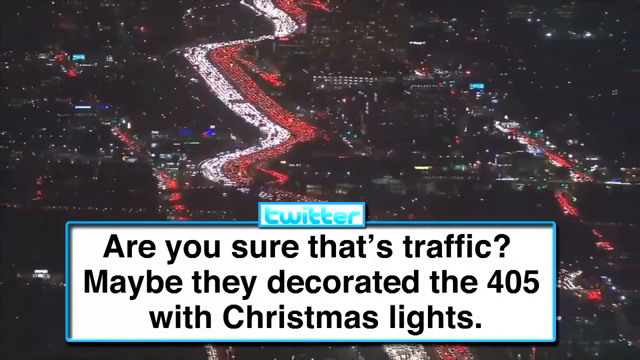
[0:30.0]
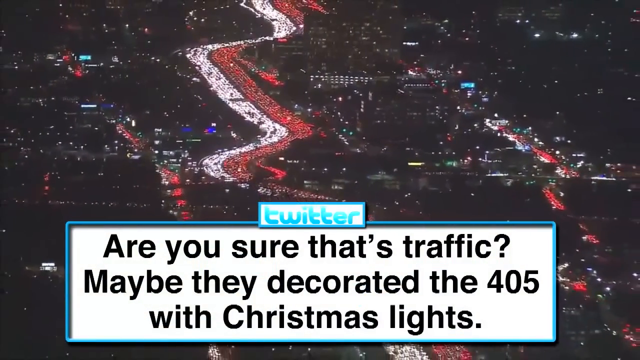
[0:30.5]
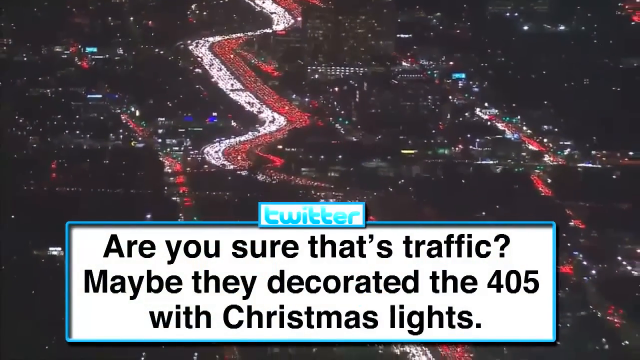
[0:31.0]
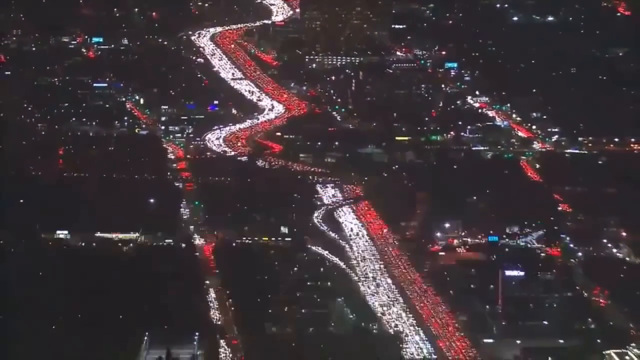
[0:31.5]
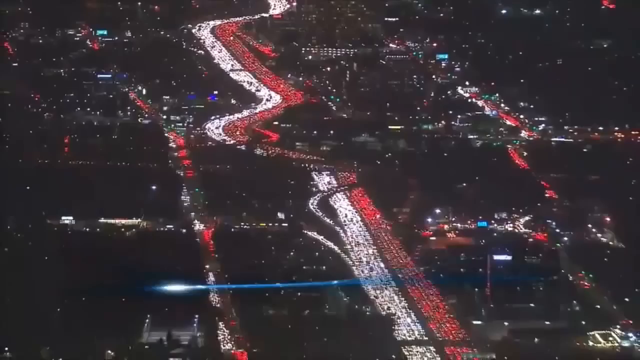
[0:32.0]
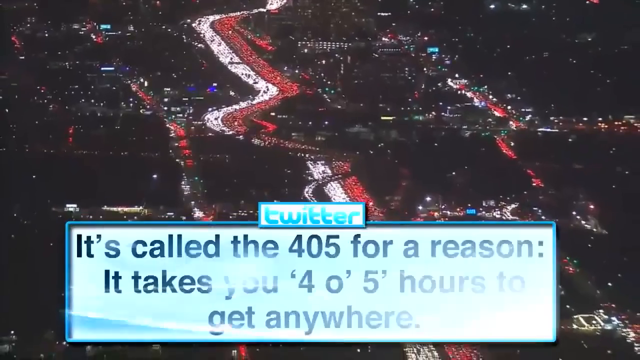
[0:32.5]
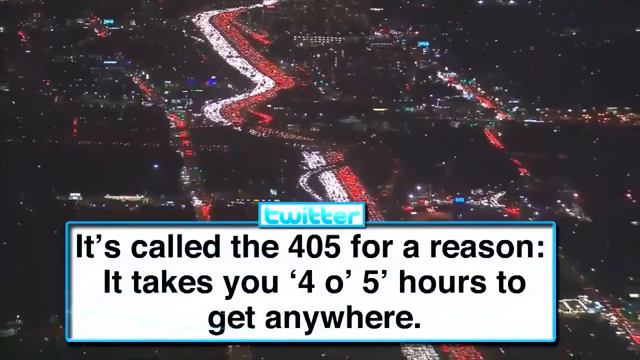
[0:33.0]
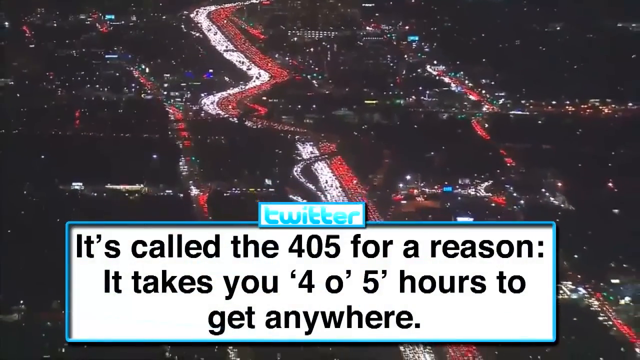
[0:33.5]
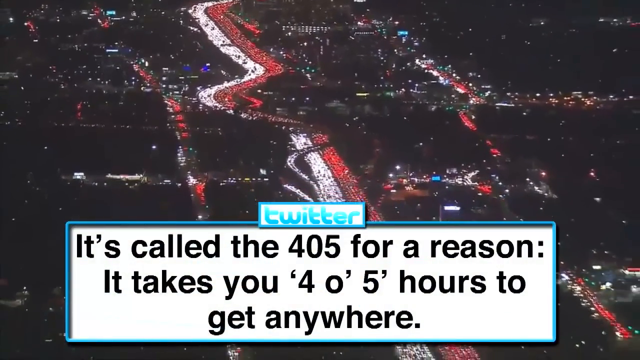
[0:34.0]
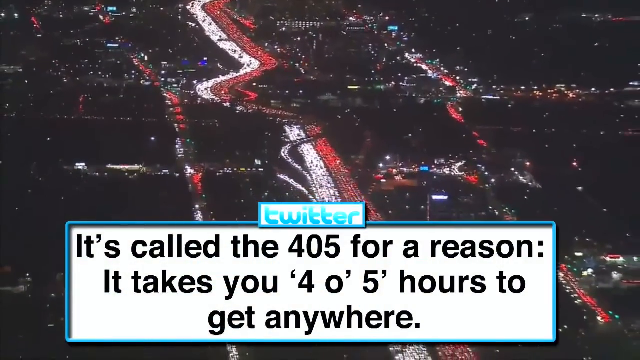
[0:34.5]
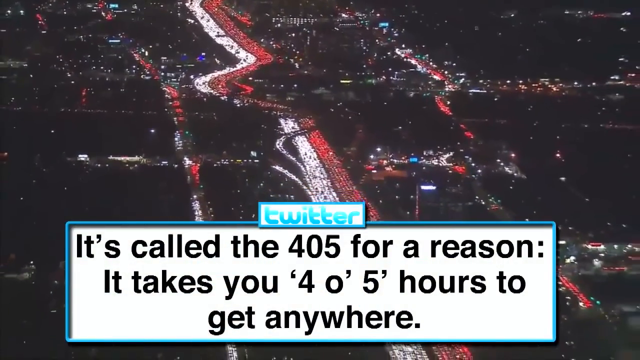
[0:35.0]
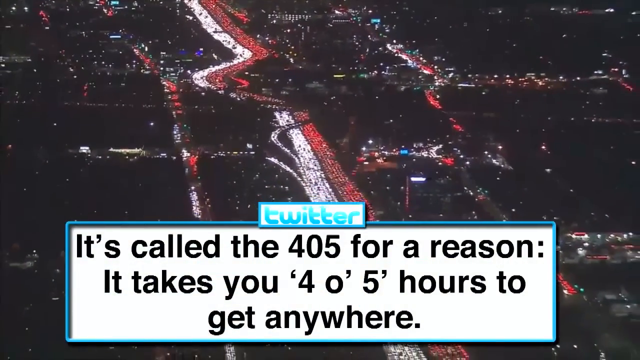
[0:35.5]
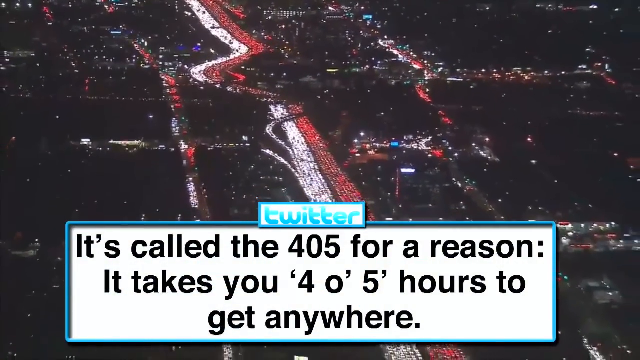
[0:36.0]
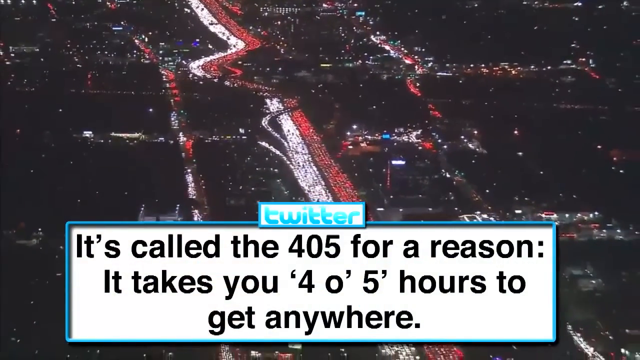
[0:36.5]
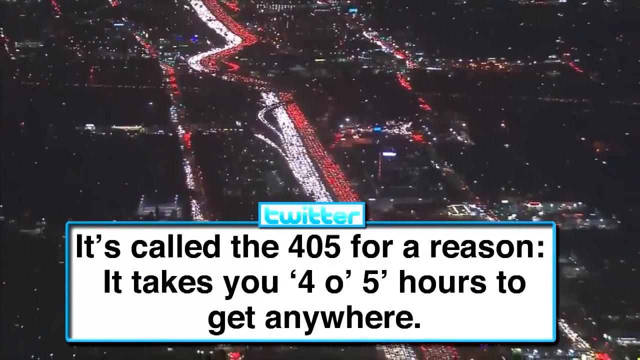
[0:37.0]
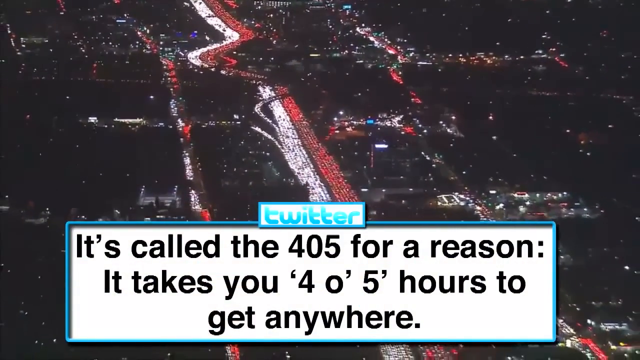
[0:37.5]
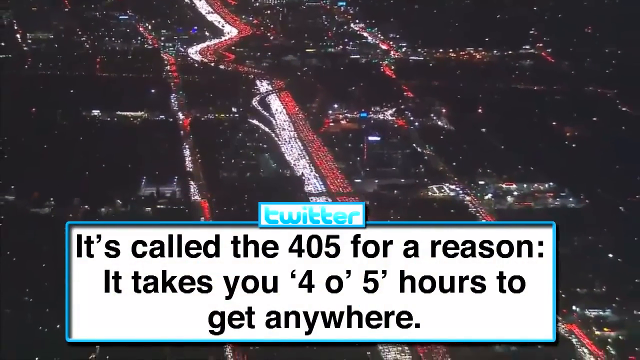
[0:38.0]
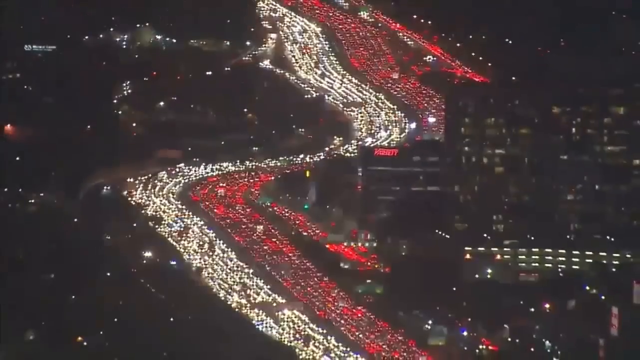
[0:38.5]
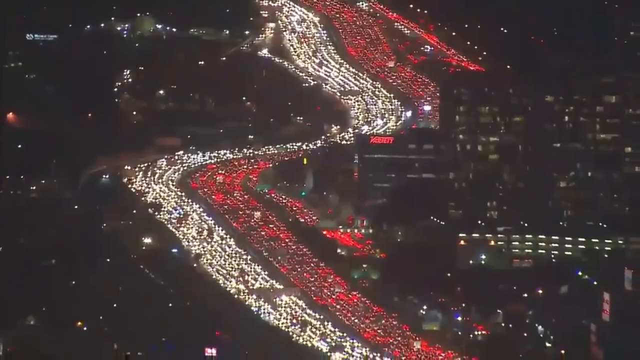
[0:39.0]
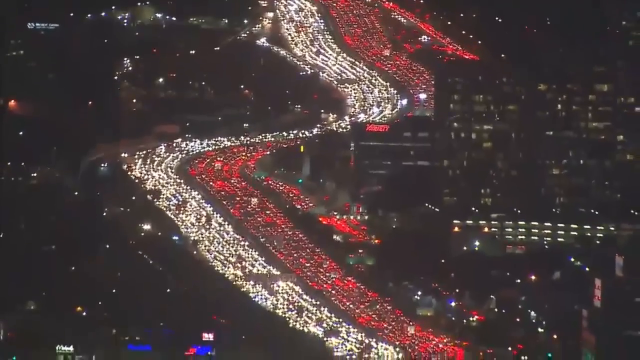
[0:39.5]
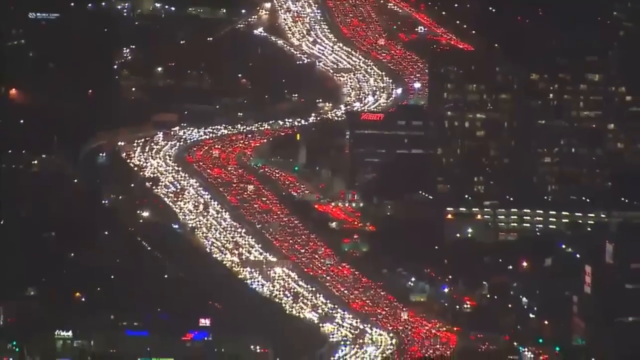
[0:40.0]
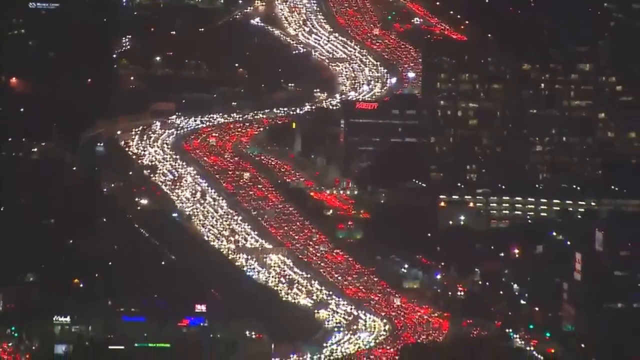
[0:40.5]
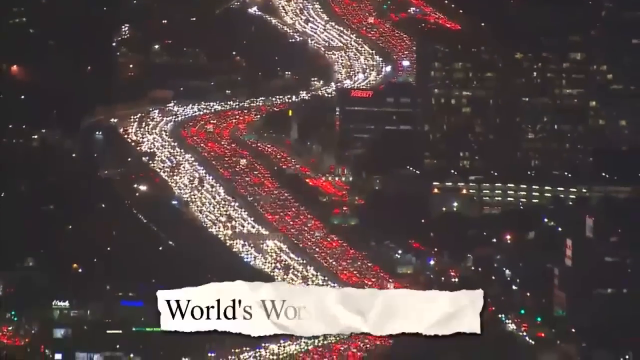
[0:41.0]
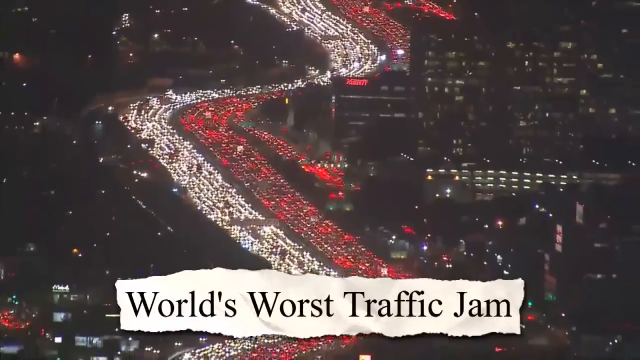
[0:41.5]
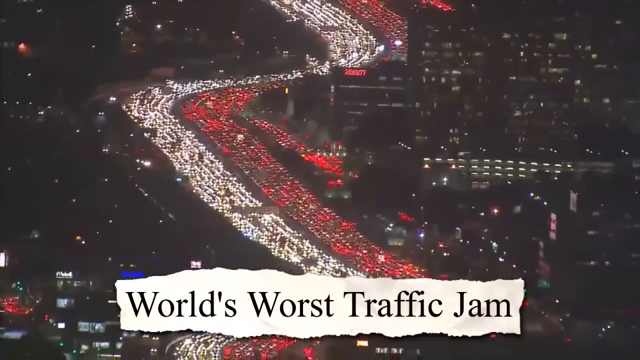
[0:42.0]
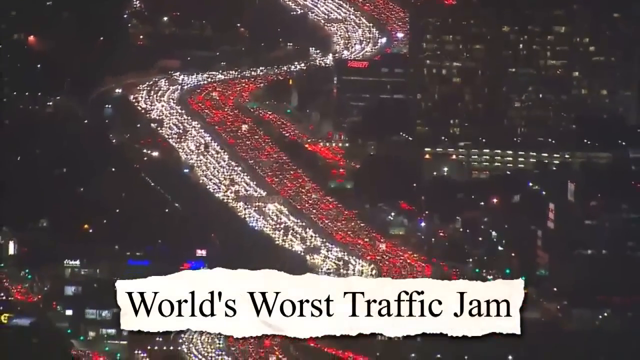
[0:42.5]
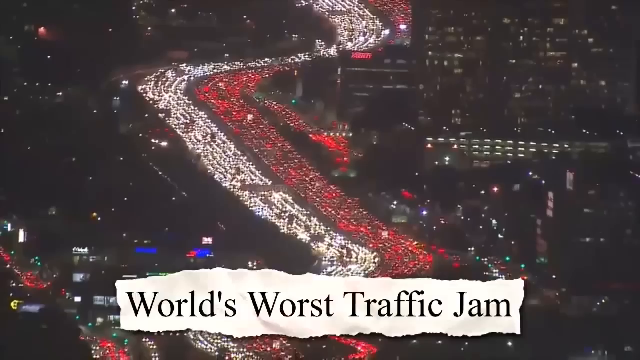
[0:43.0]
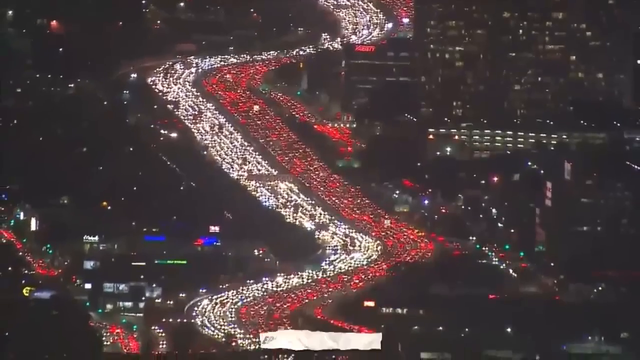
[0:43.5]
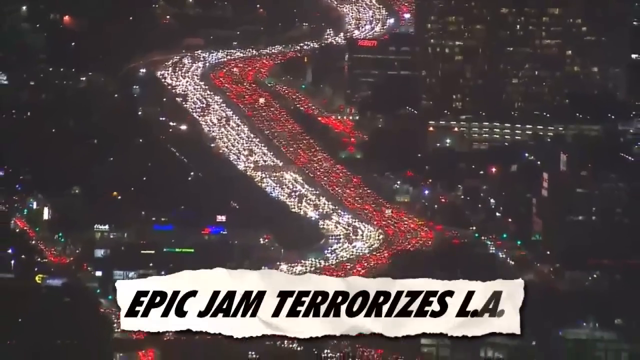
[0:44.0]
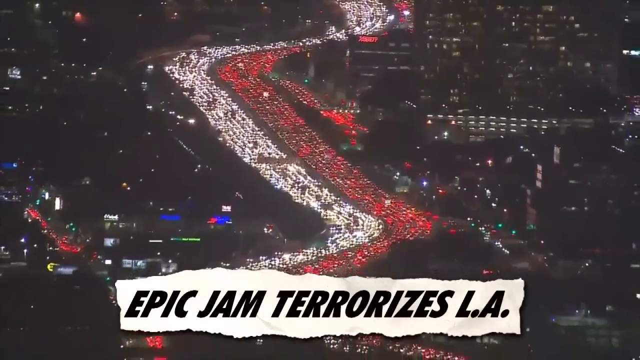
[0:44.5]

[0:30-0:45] Another Twitter comment appears in the same white box with a blue border, black text and the Twitter logo at the top center. It reads: "it's called the 405 for a reason. It takes you 405 hours to get anywhere." Behind it, the traffic jam continues in a slow zoom out, followed by another slow pan zooming out. A computer-animated headline that looks like it has been torn from a piece of paper, like a newspaper headline, reads "world's worst traffic jam". Another headline in a different, bolder italic font reads "epic jam terrorizes LA". The same collection of traffic jam footage plays in the background.